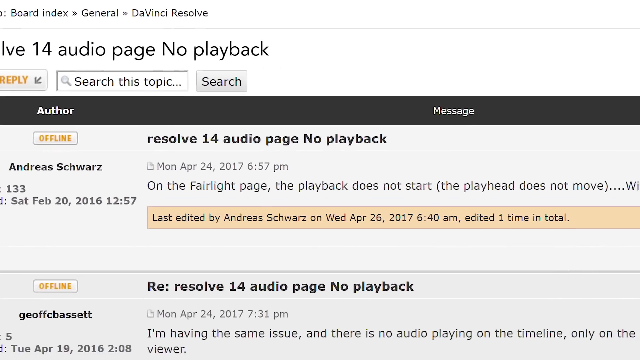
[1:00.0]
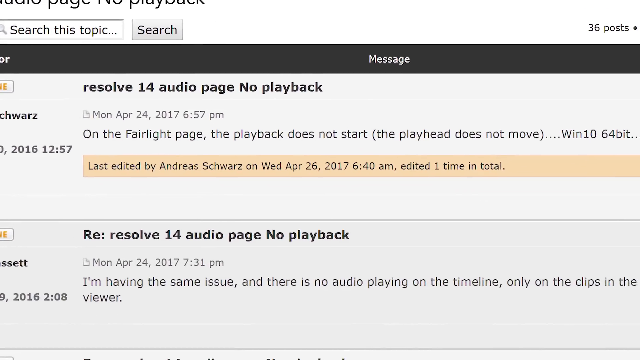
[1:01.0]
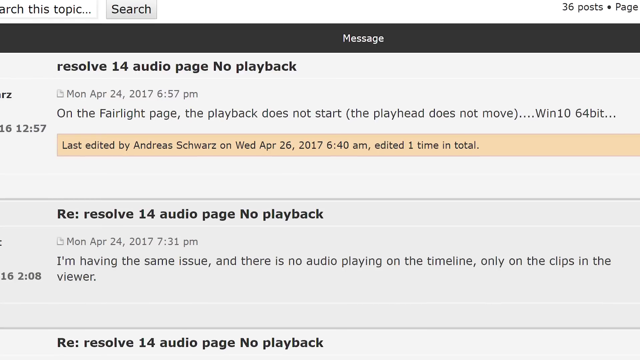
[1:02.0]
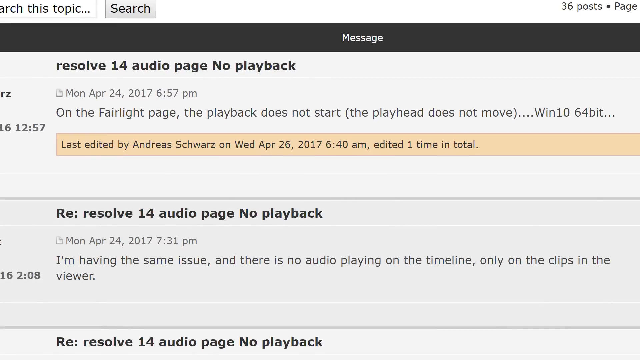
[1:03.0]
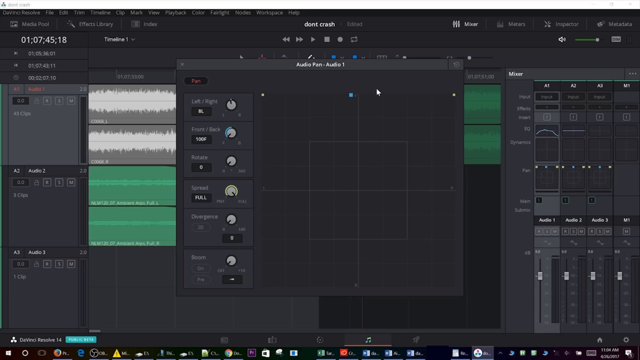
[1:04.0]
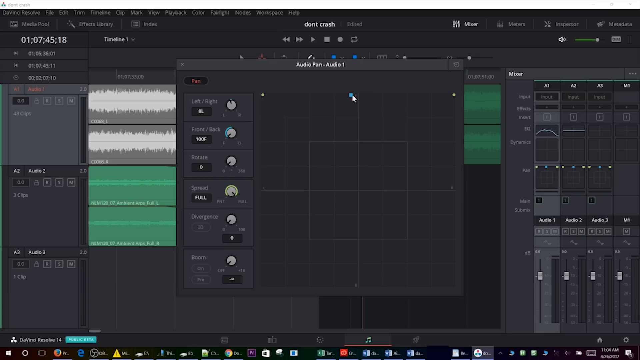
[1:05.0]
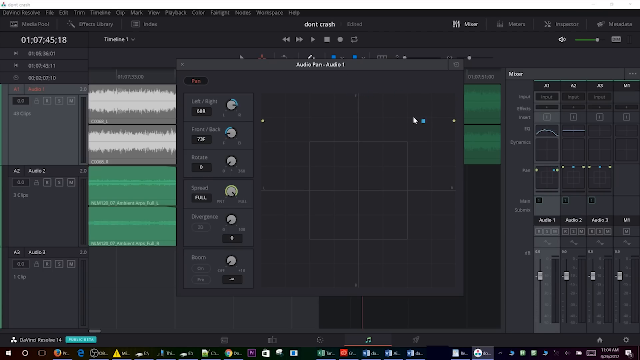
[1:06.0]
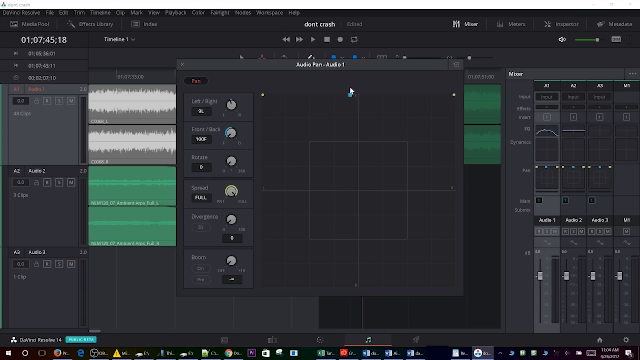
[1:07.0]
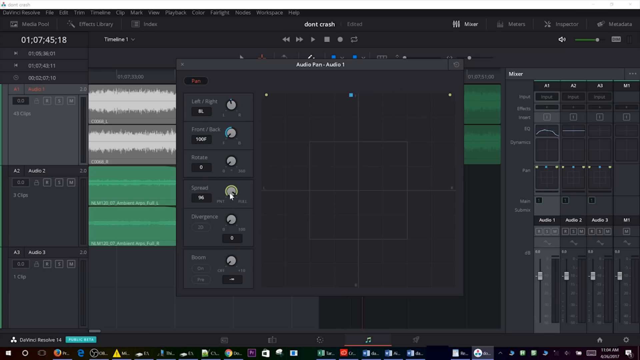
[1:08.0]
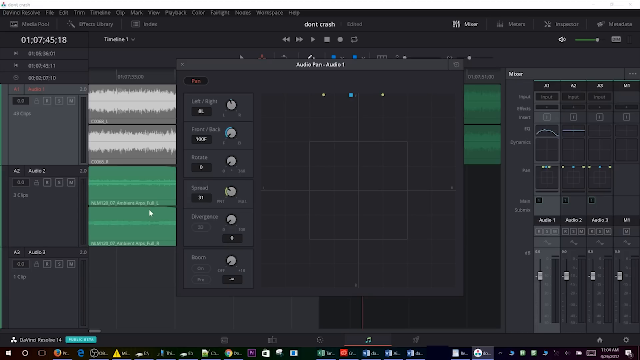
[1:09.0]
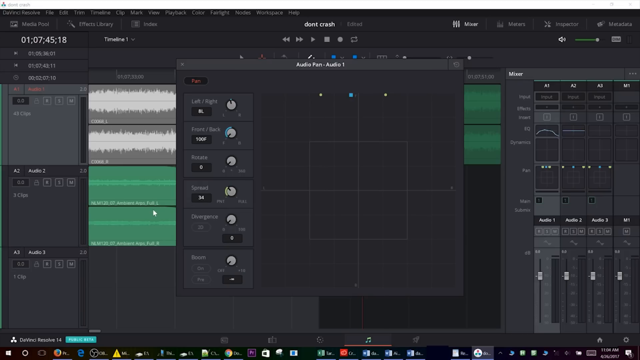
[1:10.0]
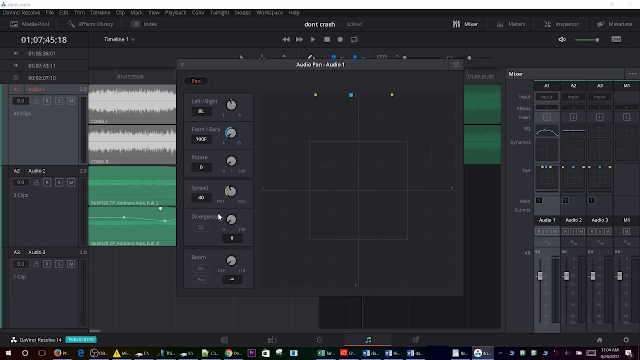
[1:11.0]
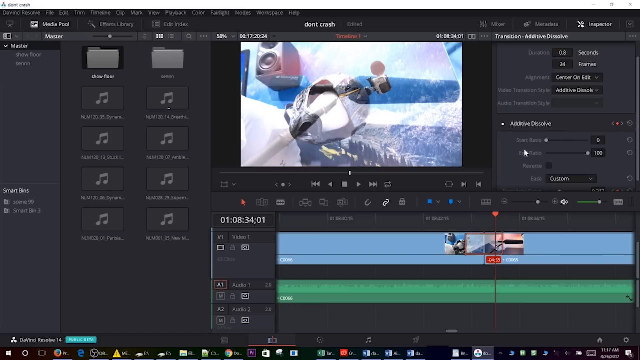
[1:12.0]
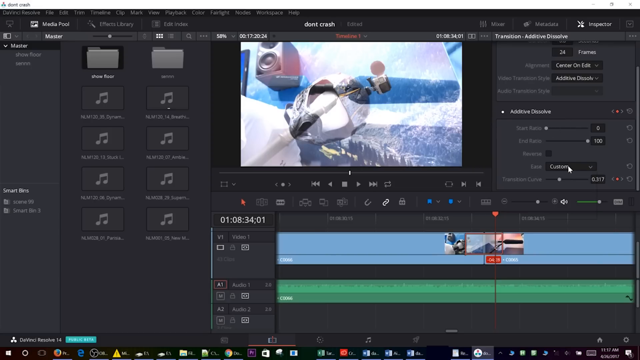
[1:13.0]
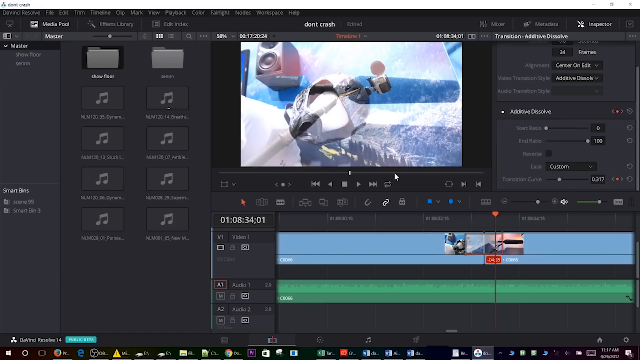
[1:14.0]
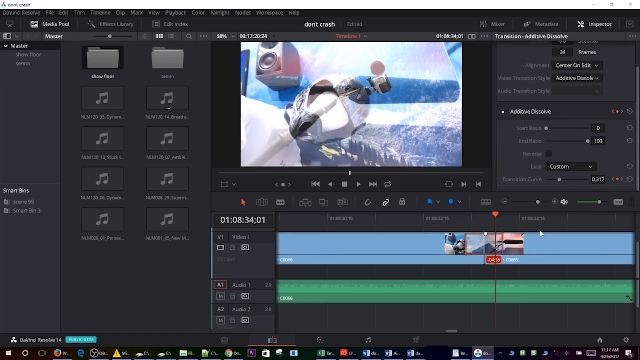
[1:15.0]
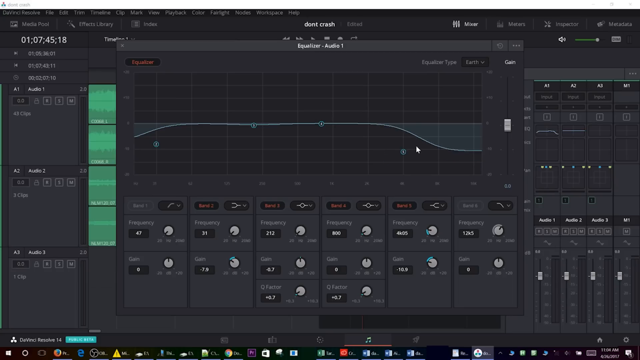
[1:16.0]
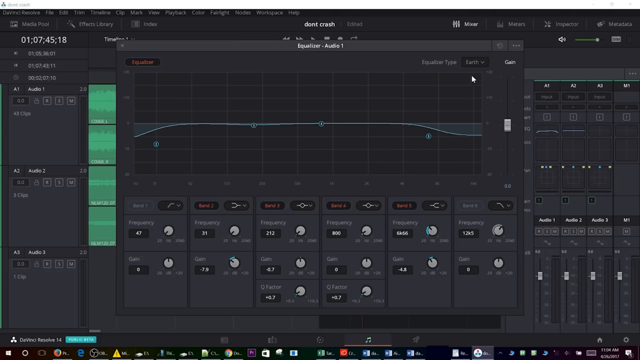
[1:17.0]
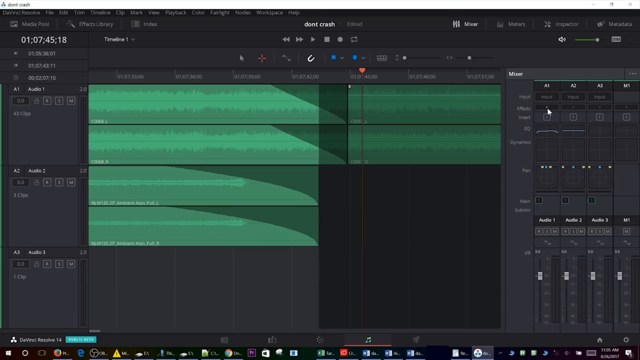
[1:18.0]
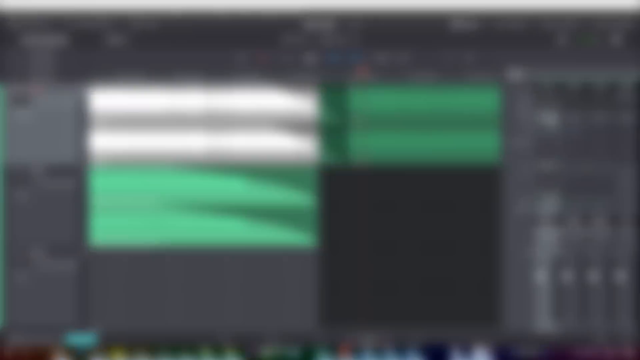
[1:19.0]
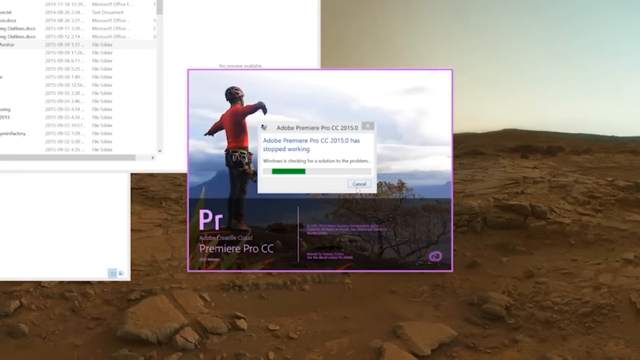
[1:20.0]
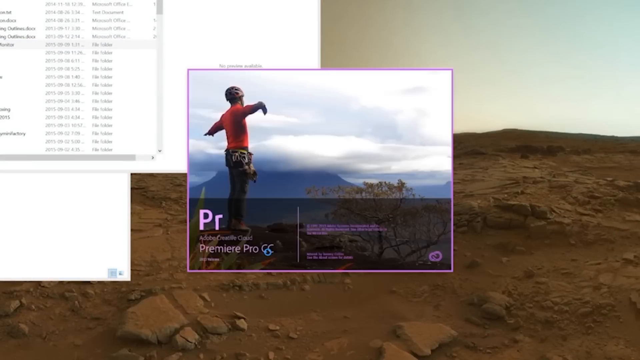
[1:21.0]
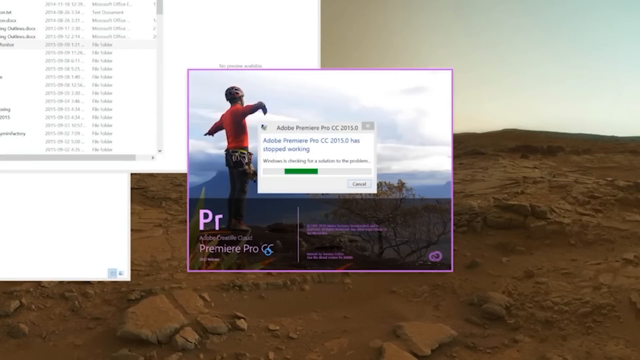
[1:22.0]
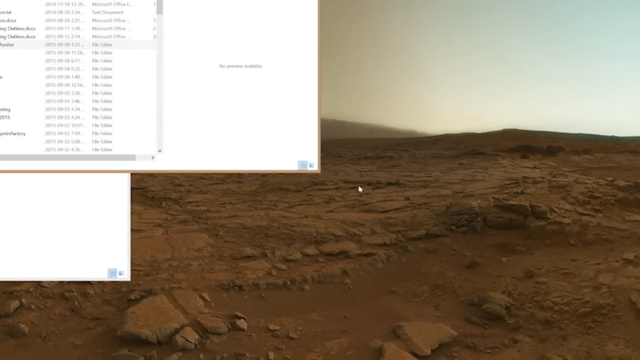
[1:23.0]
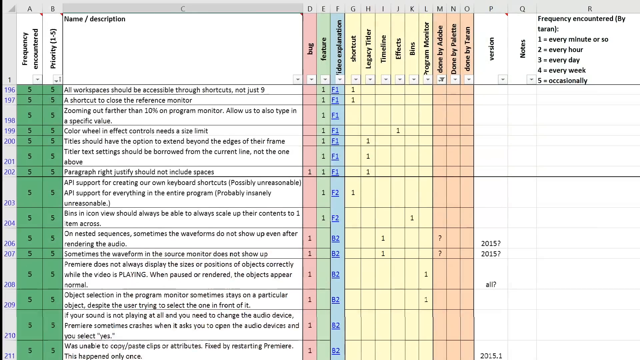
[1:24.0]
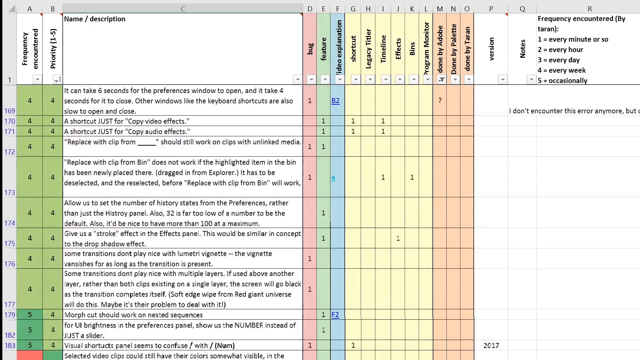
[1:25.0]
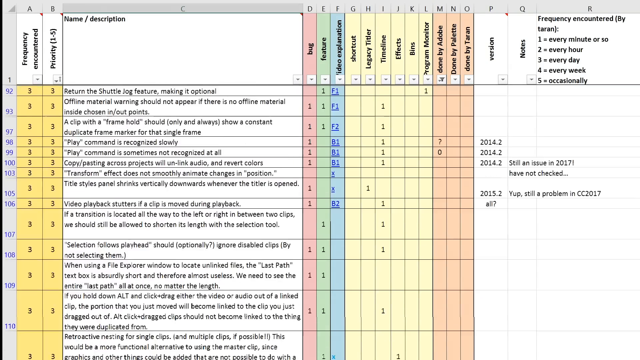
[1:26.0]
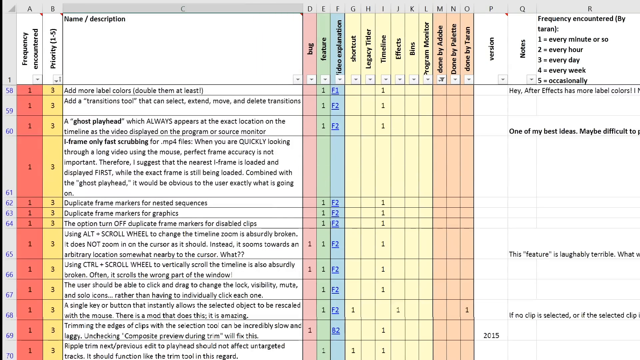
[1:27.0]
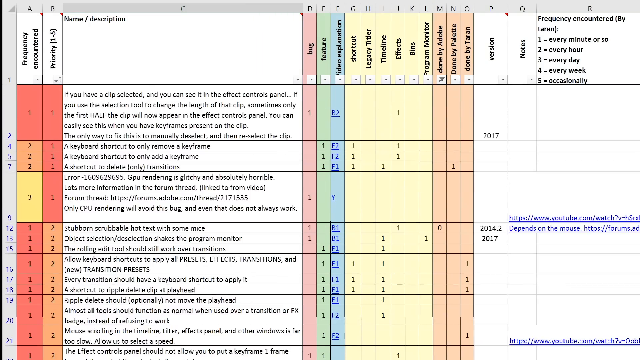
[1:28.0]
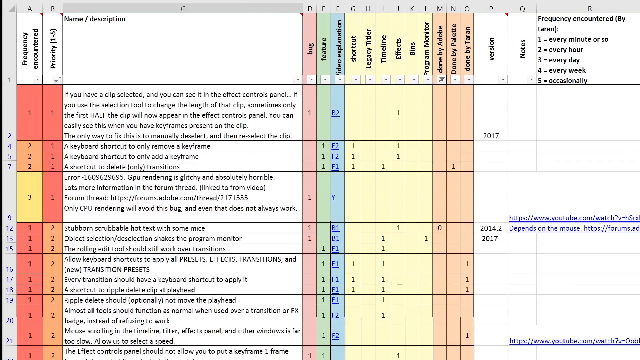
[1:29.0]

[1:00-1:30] The people in the control room seem to be controlling the screens, and the video seems to show only the screens. A mouse seems to be moved around the screen. Something on screen appears to be dated April 24, 2017 at 6:57 PM.